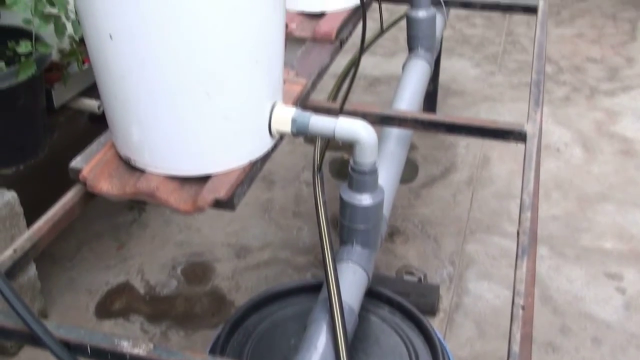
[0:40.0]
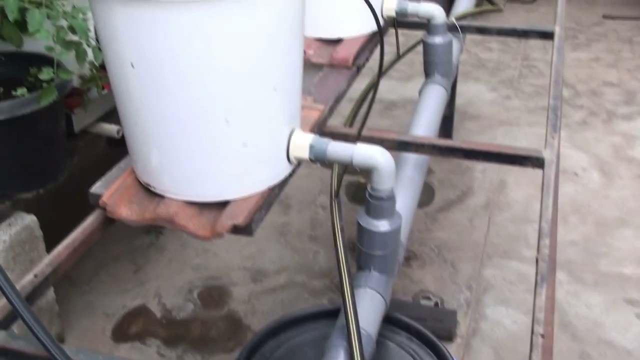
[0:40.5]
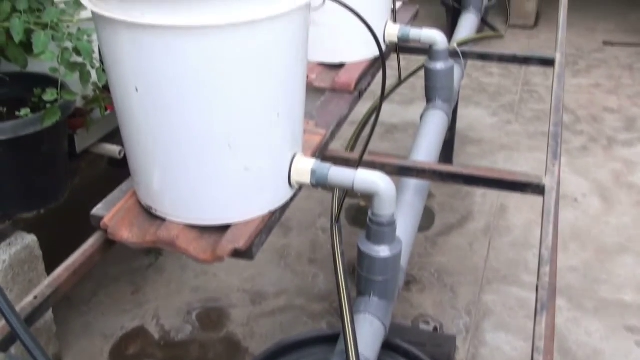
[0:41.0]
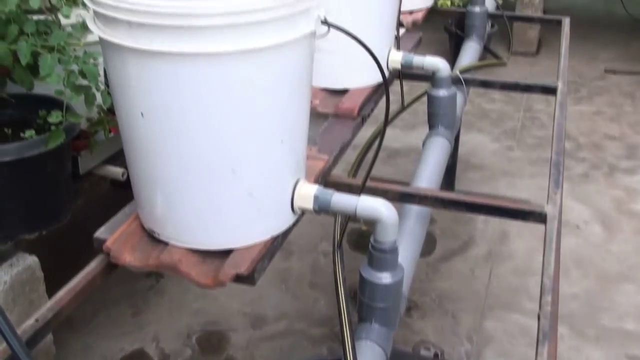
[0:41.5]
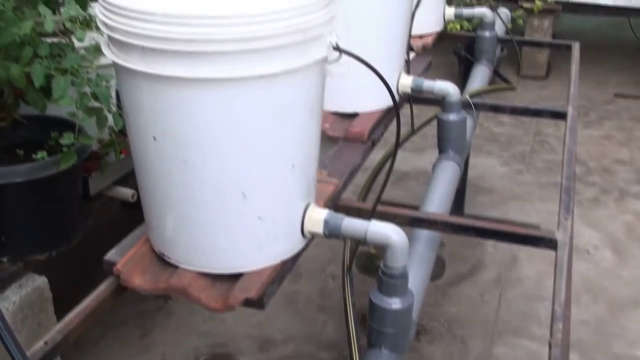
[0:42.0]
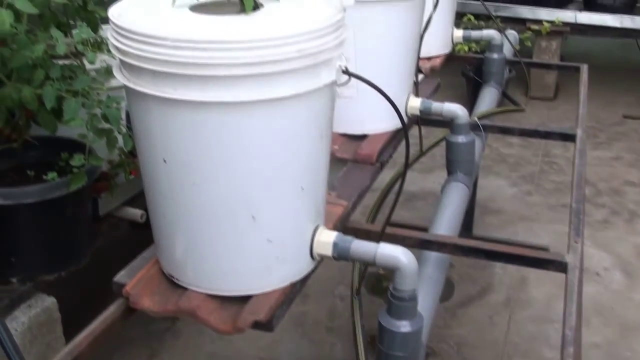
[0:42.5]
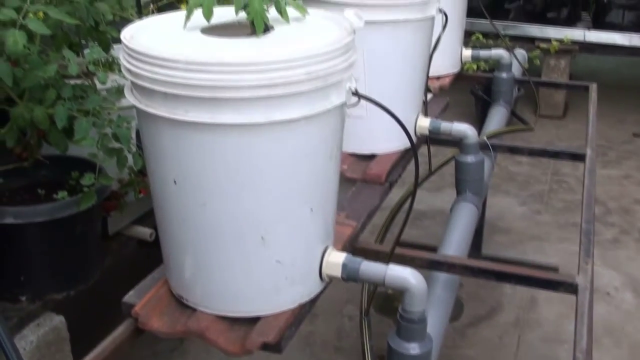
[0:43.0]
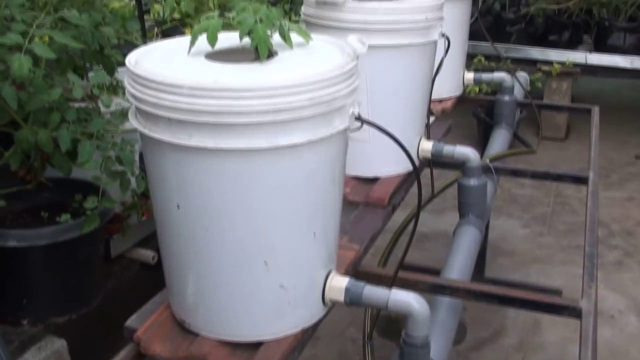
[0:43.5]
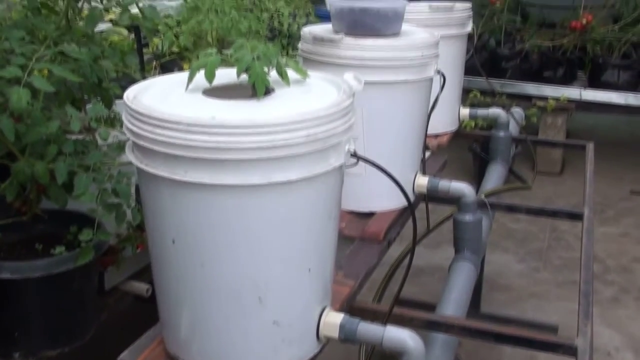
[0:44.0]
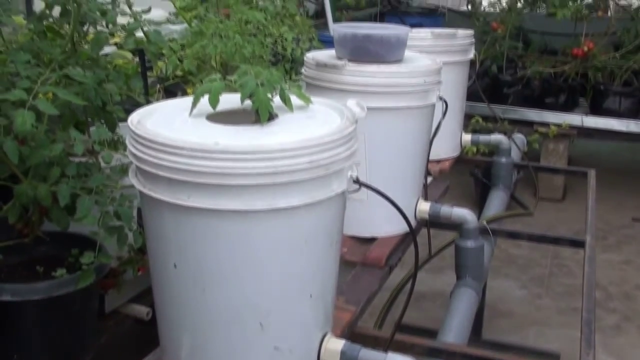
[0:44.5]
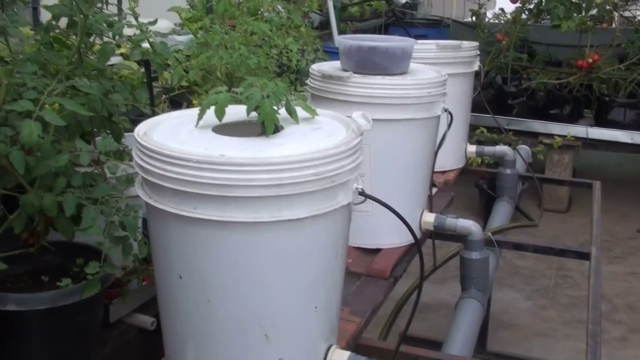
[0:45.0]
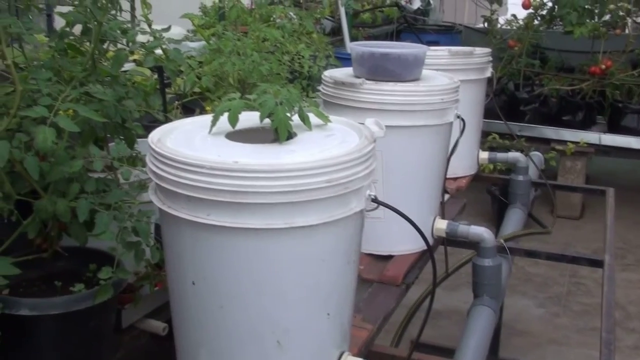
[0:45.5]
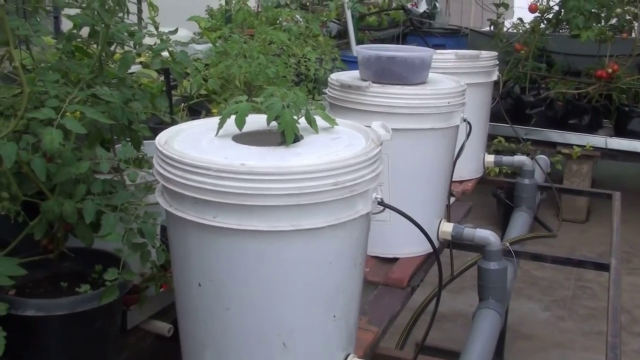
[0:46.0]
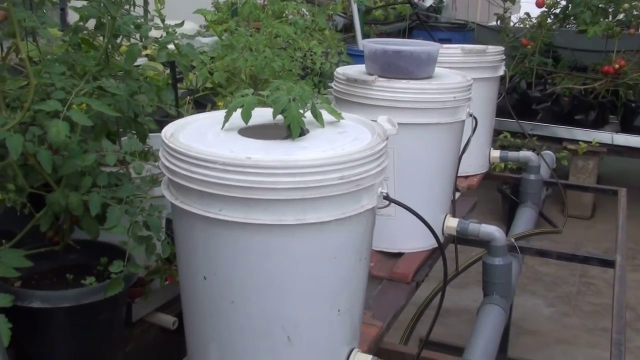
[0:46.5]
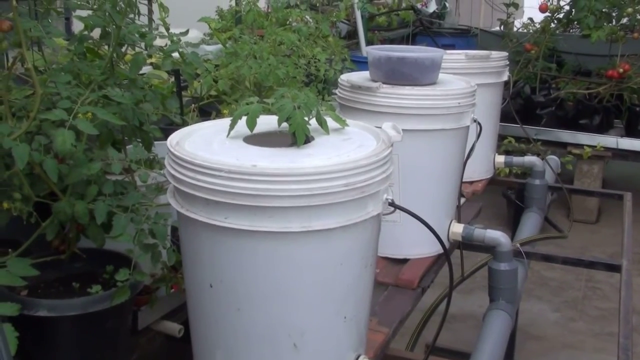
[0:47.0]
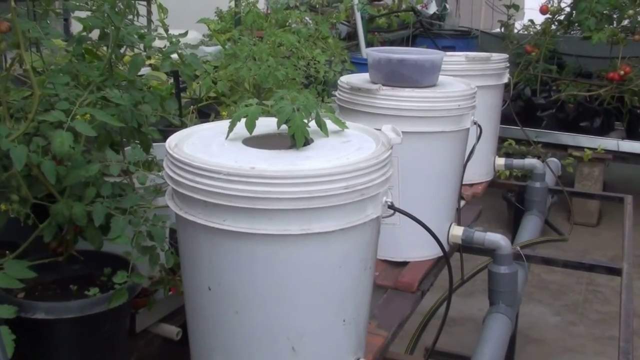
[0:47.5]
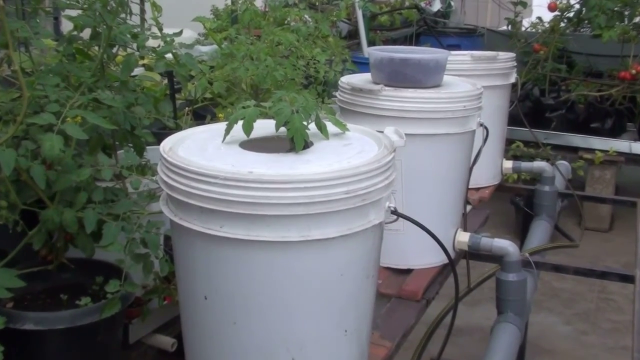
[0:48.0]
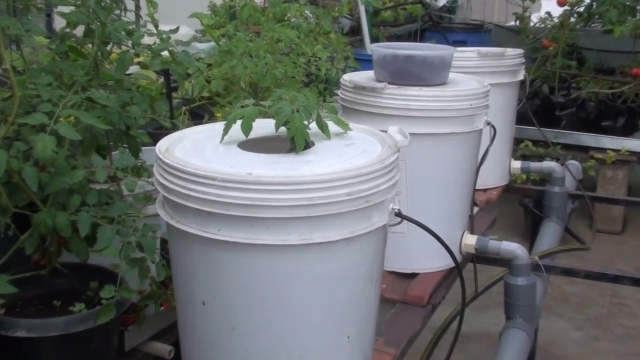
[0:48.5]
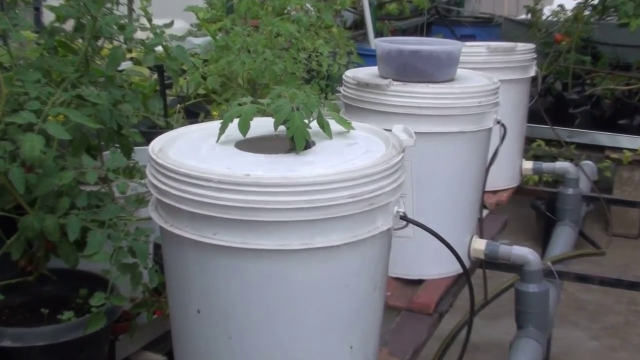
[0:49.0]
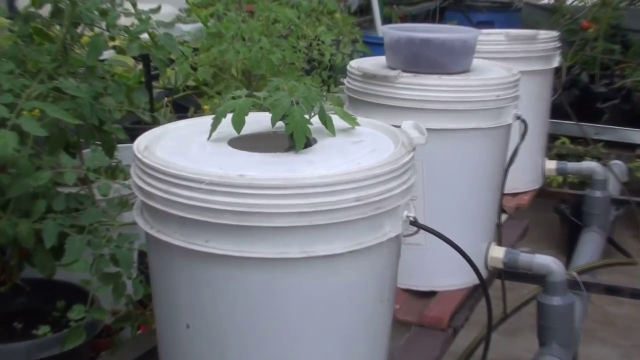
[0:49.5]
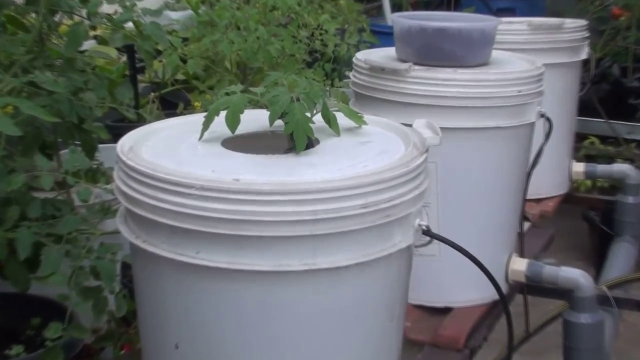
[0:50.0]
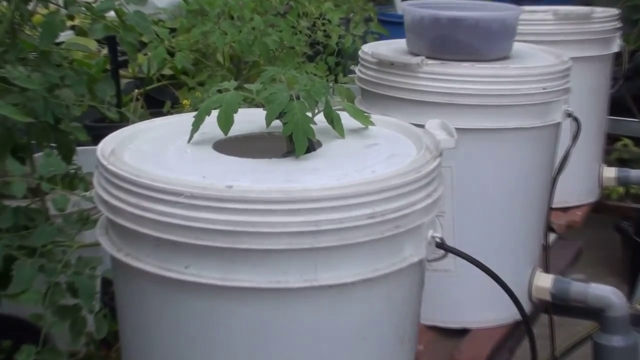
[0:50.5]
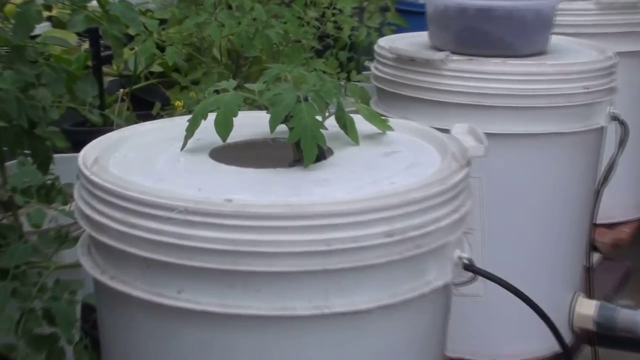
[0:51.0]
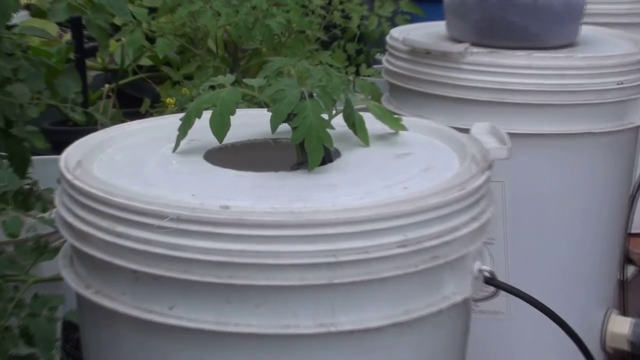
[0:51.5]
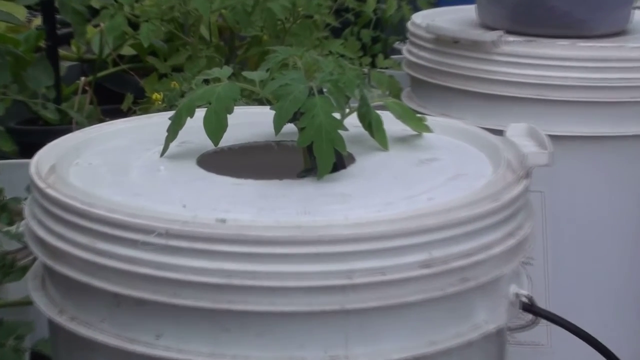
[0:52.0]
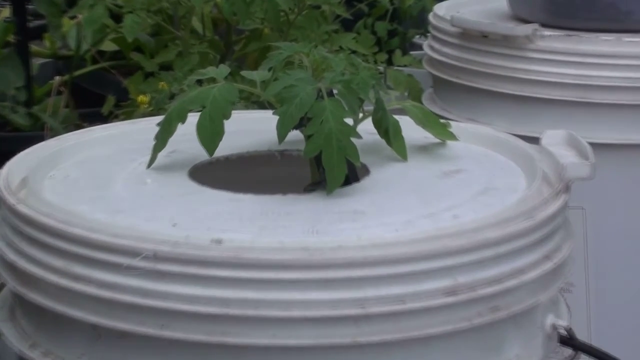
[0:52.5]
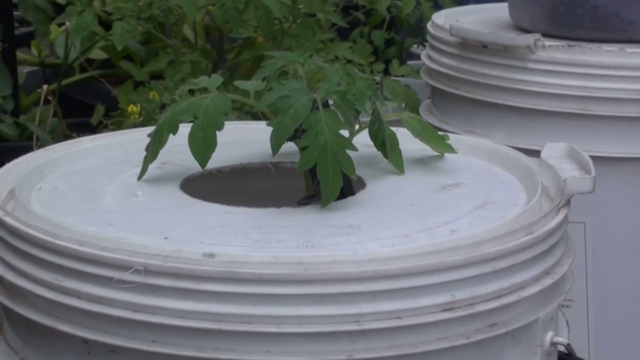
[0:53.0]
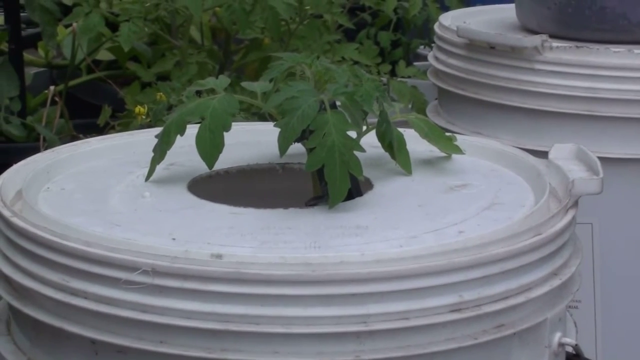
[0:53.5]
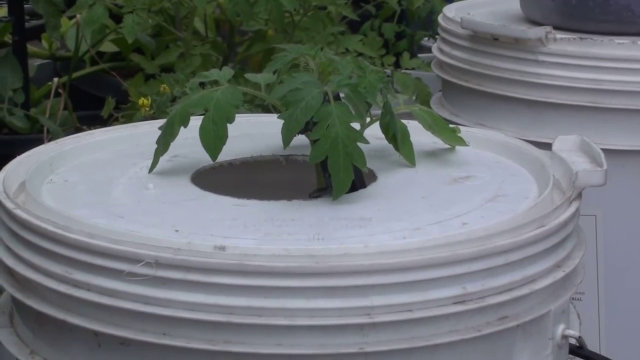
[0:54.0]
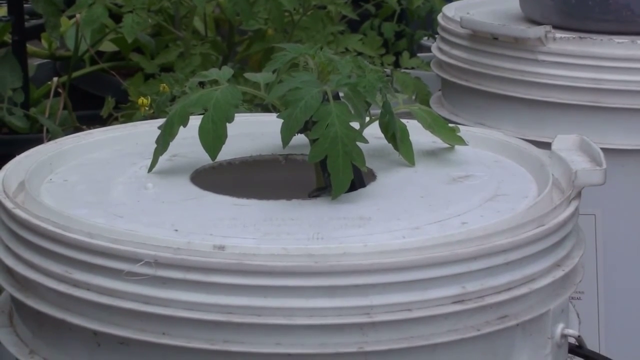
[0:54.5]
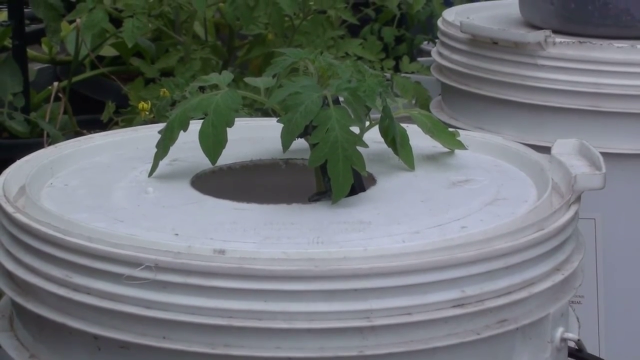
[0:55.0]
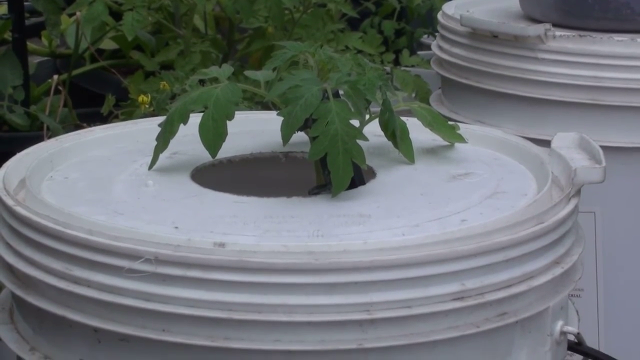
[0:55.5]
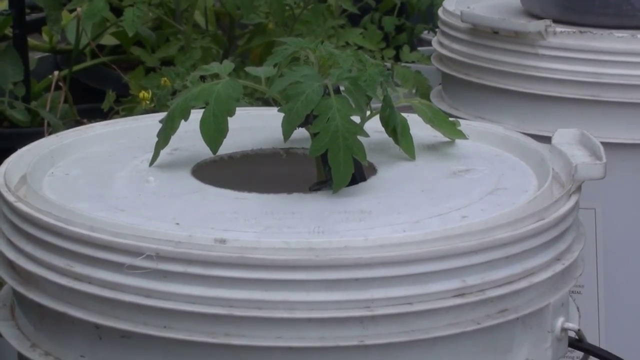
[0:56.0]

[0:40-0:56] The camera pans up and down in slow motion, showing the garden bucket, and zooms in on an unidentified plant. The middle bucket has a small lunch box or small container on top. The setting is an orchard, possibly with apples and other fruits. On the other side, three buckets are interconnected with pipes and also connected to the bottom bucket on the floor, which is blue with a black lid. Steel reinforcement supports where the buckets are sitting; they sit on three tiles. There are droplets and water on the floor.